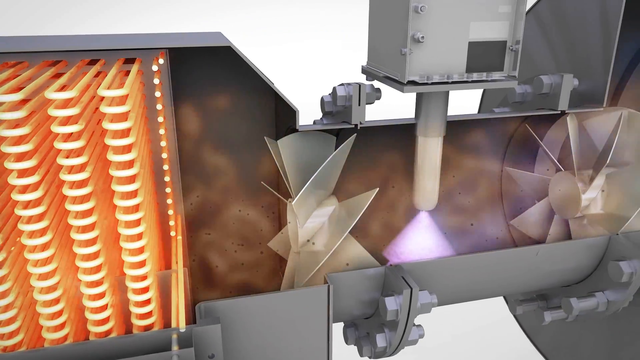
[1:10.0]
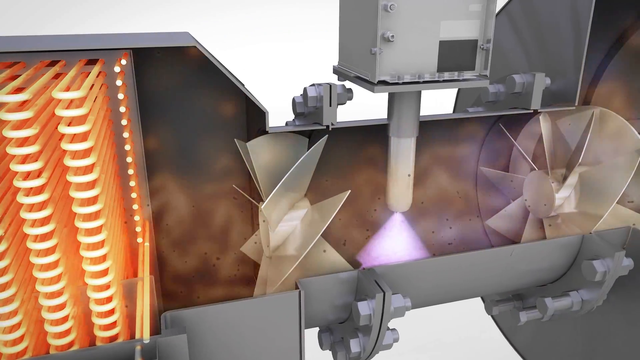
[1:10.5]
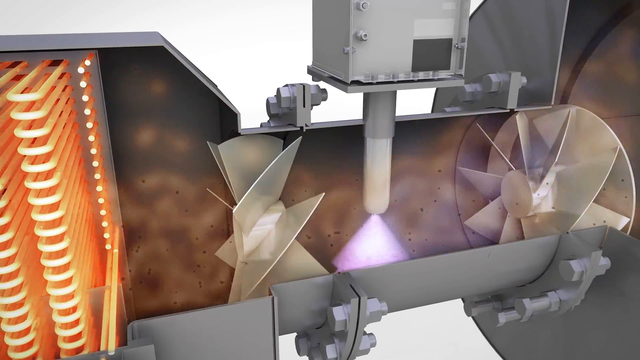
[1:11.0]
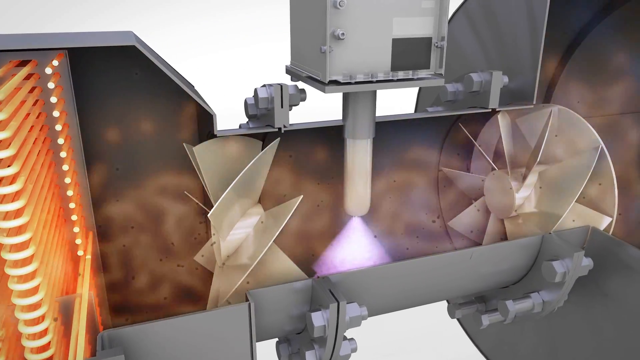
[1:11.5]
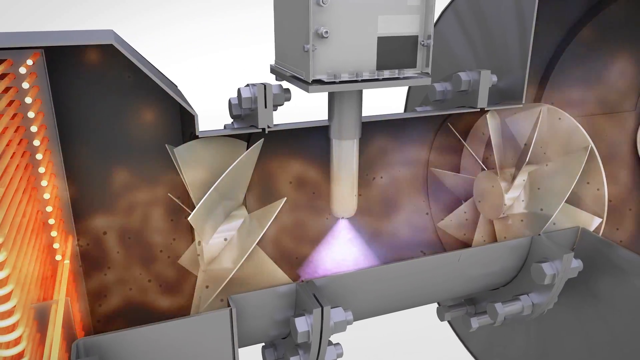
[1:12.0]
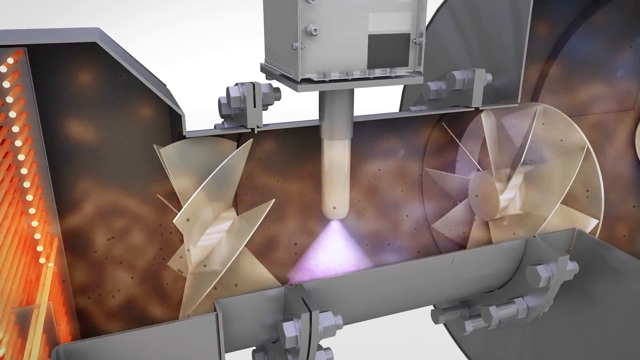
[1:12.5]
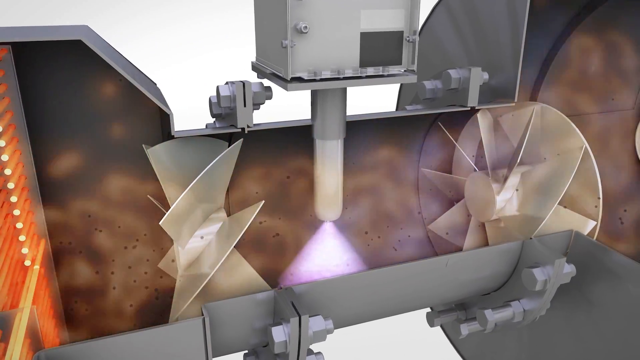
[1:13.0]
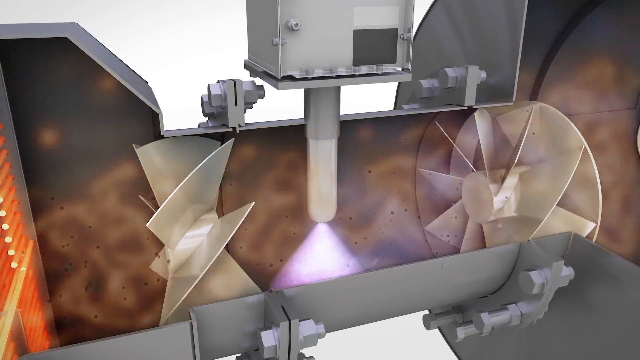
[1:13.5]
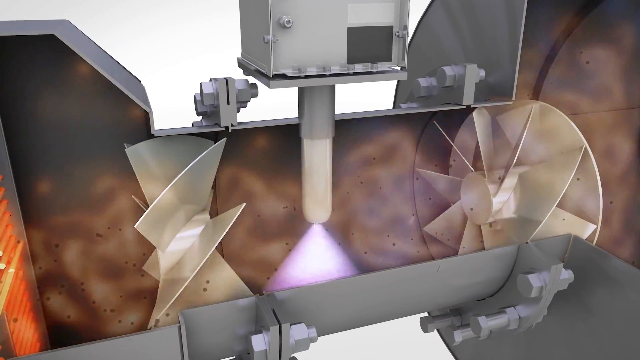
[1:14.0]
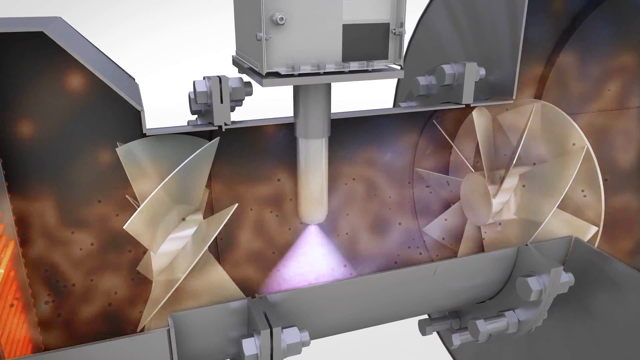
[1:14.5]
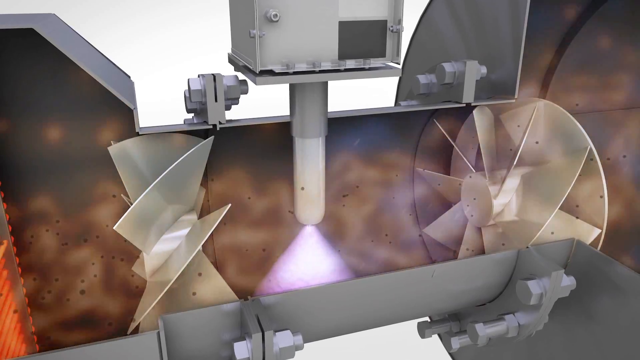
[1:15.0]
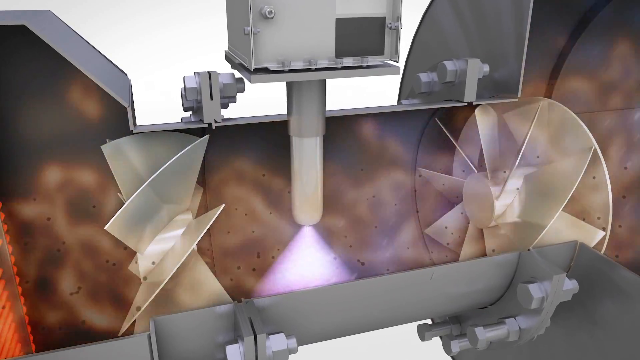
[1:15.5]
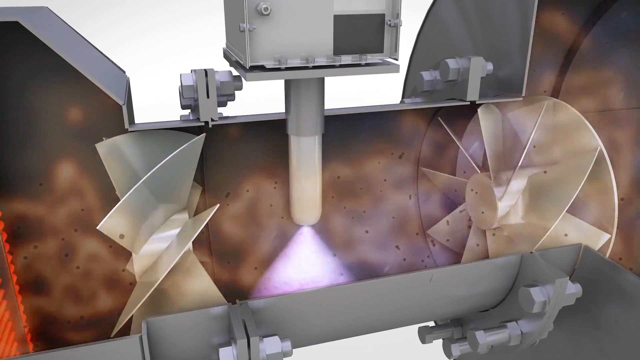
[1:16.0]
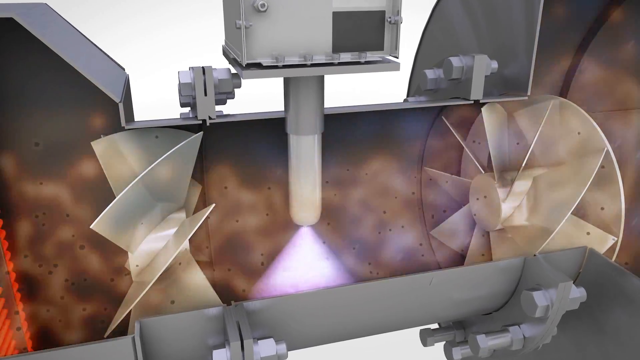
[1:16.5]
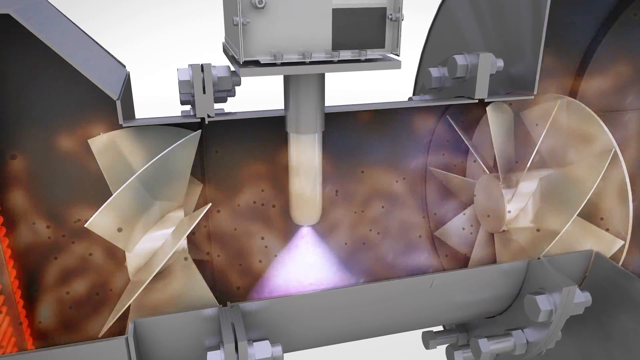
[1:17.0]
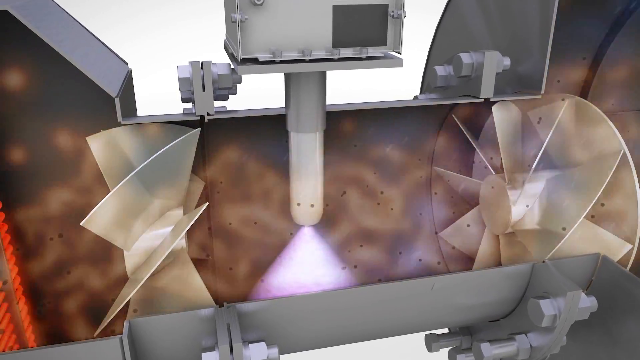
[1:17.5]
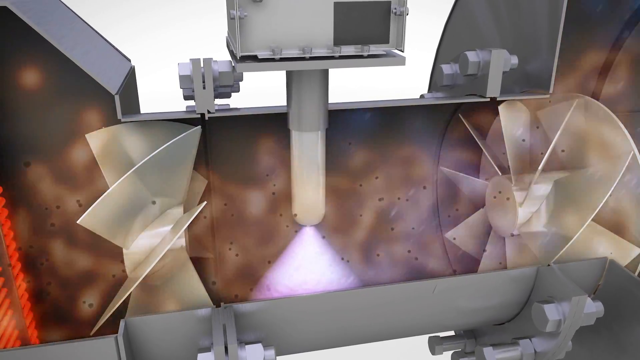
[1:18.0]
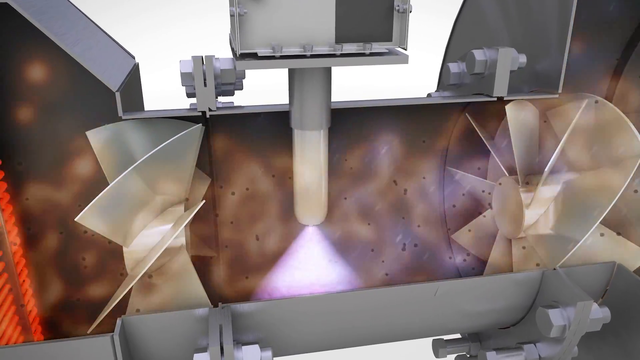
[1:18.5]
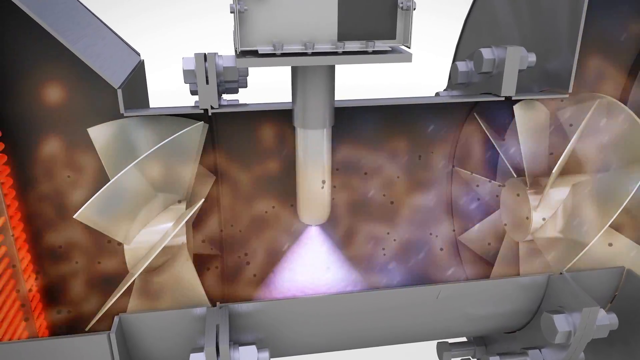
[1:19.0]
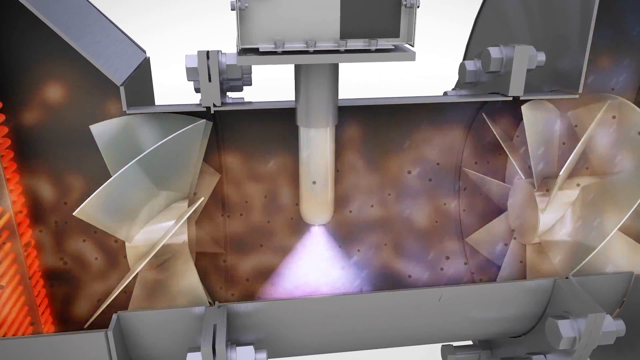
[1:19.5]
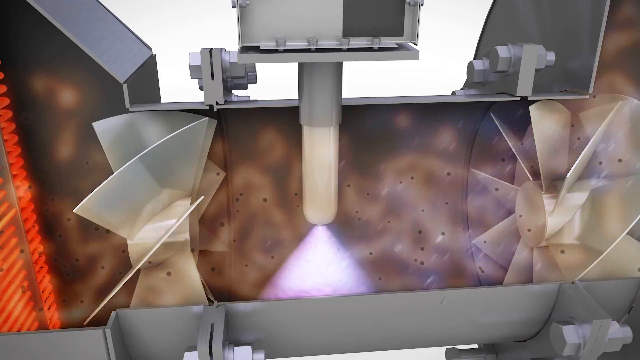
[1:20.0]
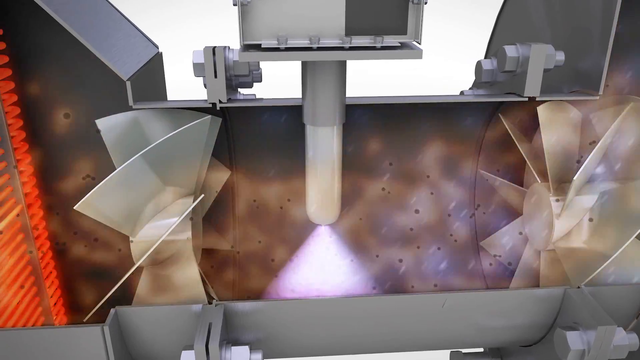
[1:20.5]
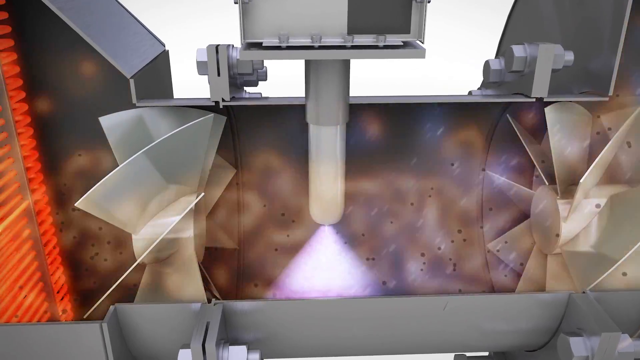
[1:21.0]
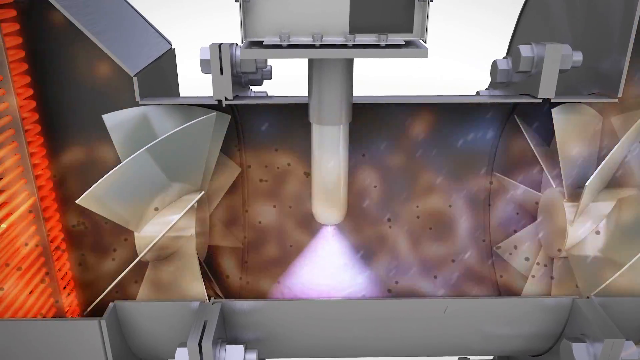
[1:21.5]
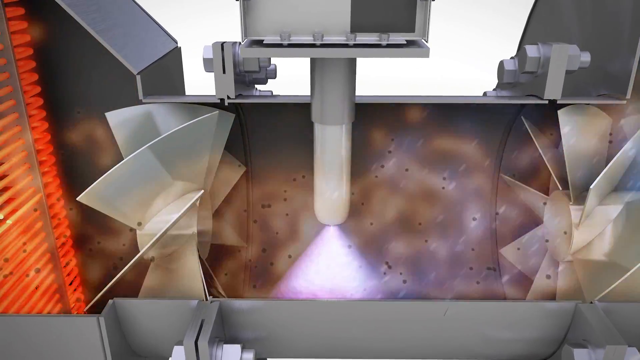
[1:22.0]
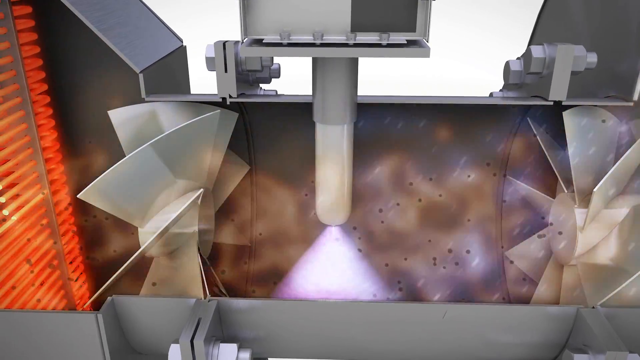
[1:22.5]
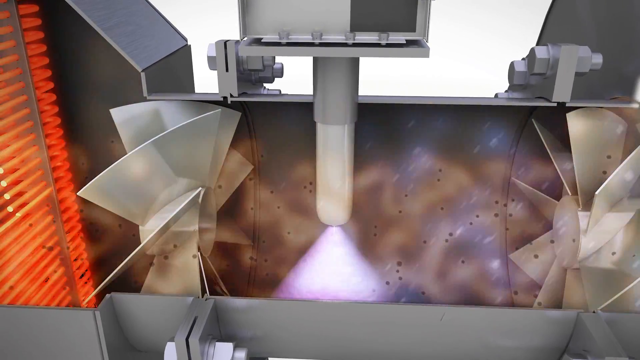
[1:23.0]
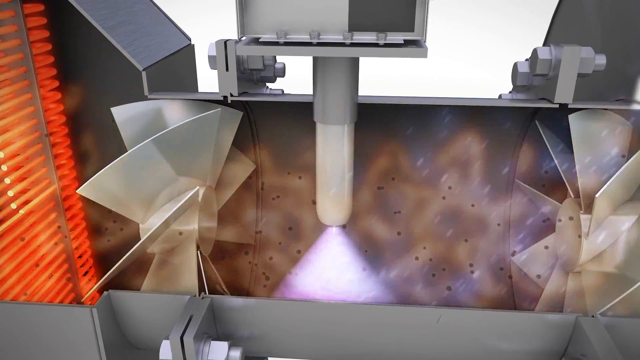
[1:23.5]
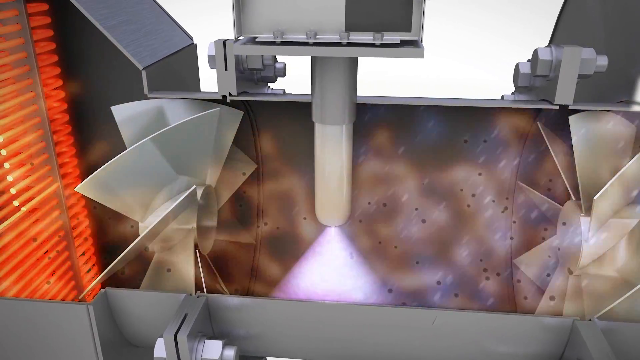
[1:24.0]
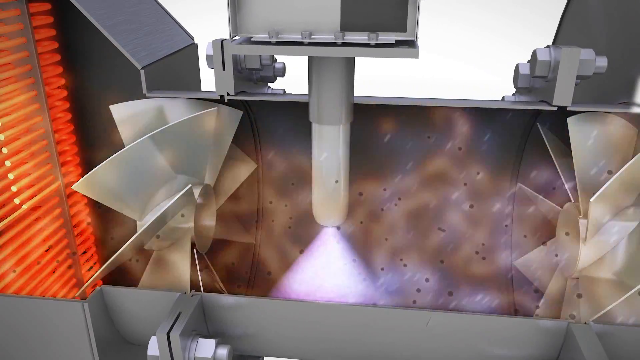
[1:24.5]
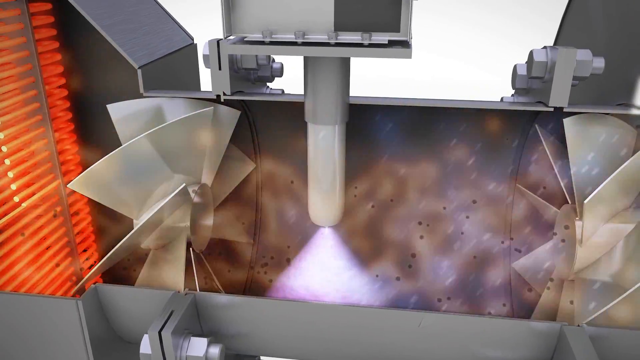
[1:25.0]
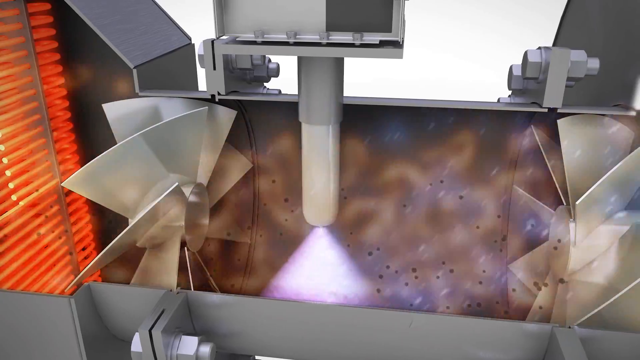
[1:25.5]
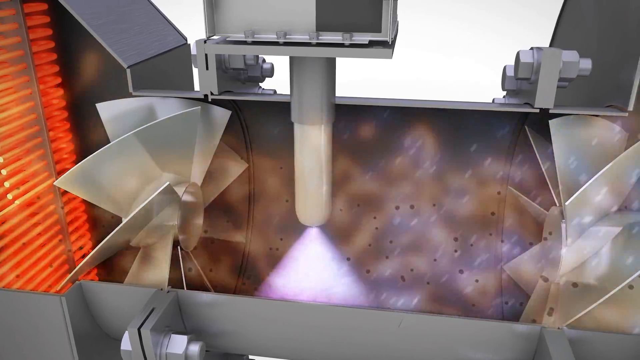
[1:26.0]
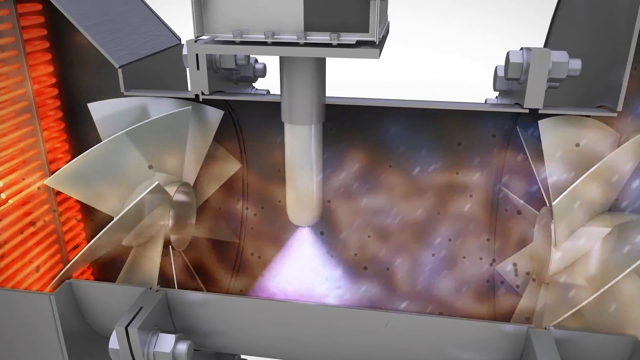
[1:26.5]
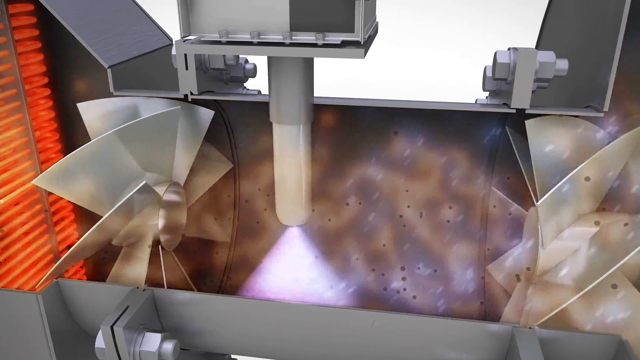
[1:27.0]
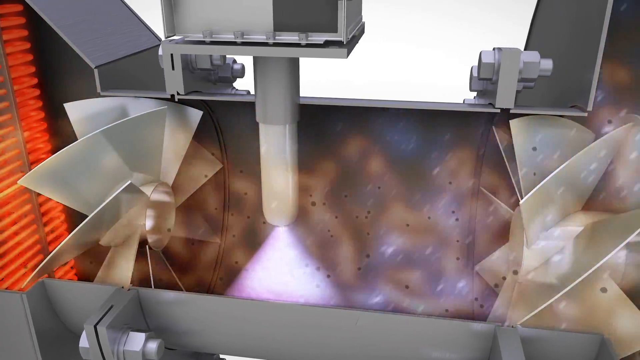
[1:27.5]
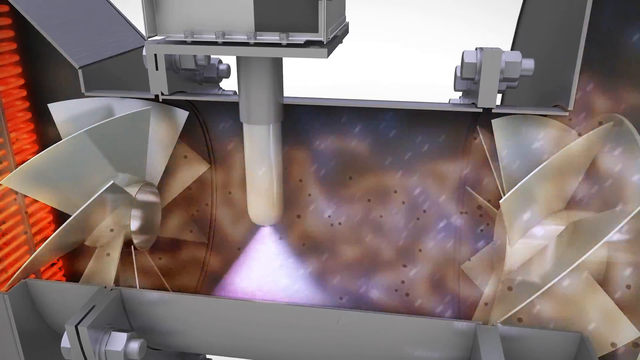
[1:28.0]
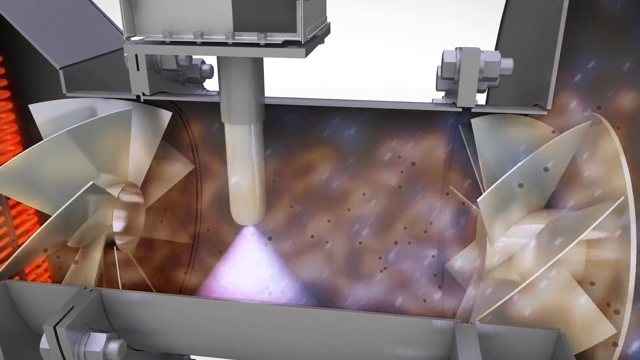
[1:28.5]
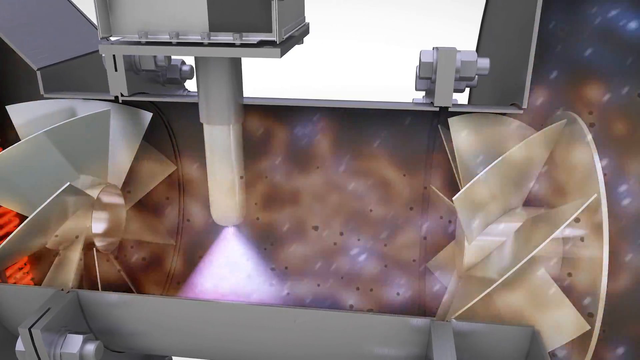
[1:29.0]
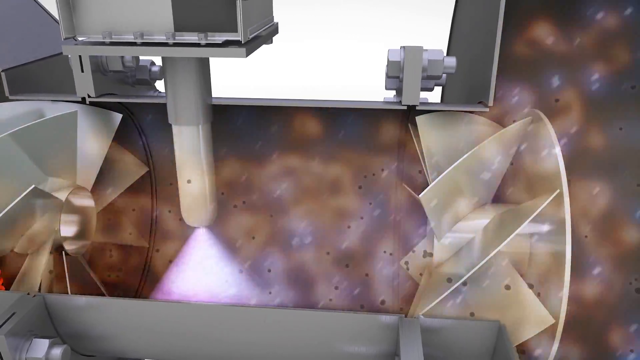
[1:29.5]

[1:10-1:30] The video moves over to the purple upside-down funnel, and air is seen blowing past the fan, with black particles floating around the blades, moving slowly from left to right. The air has also turned kind of red, probably due to the glowing red heater filter inside the pipe. Above the purple funnel are the gray tube and a silver box above the pipe. On the outside of the large pipe, screws and bolts connect the different parts, and at least three separate parts of the pipe are visible. Above the fans, on the outside, are little latches where bolts are inserted and screwed on to hold the pieces together, with four bolts on the bottom and apparently three on top.